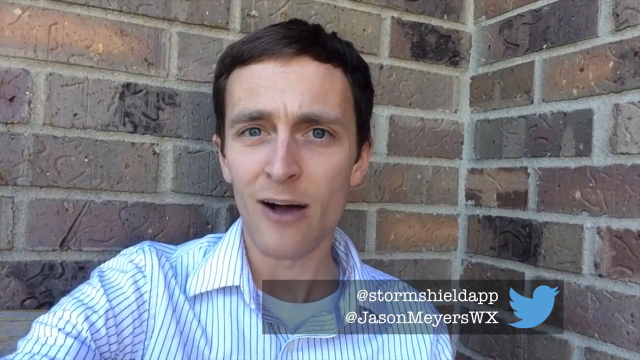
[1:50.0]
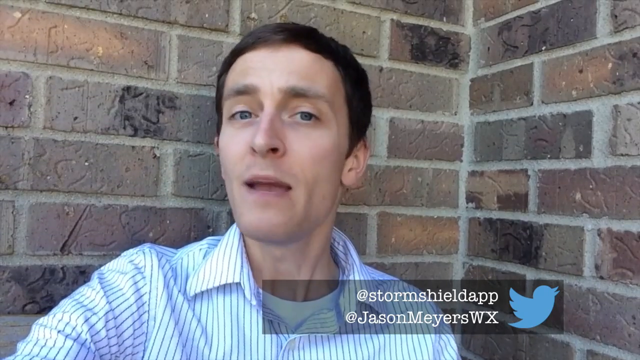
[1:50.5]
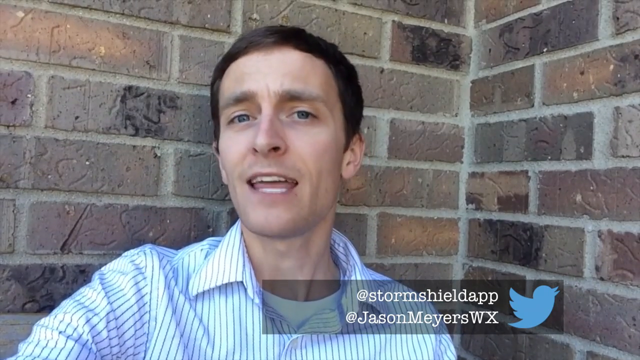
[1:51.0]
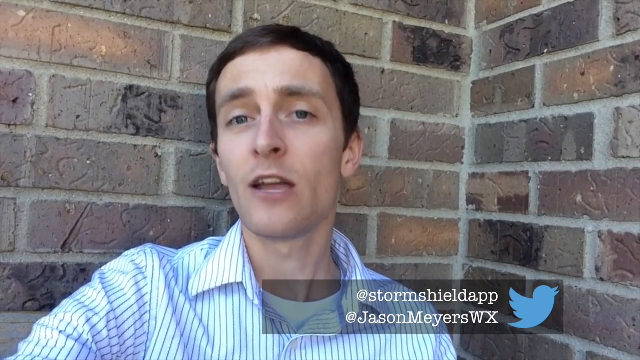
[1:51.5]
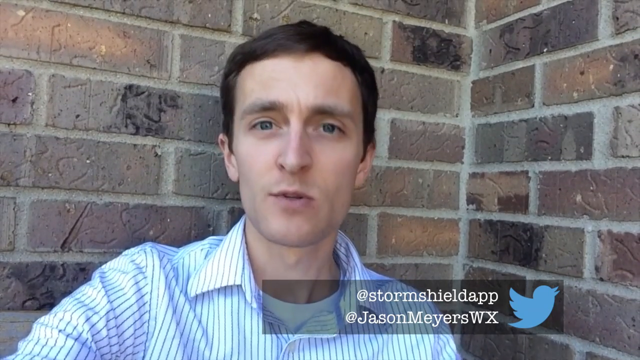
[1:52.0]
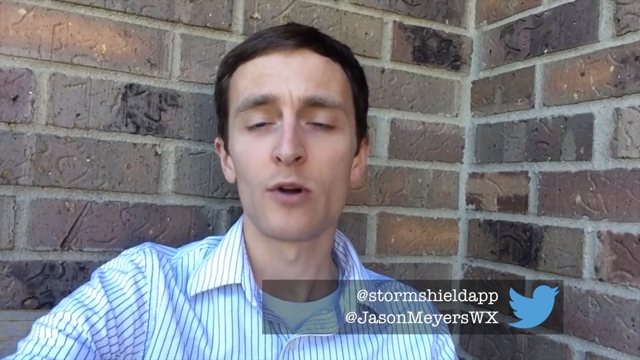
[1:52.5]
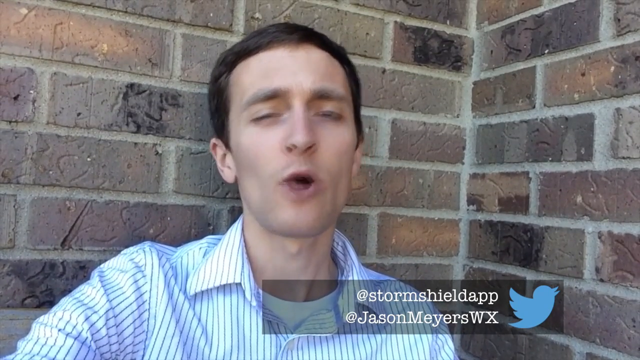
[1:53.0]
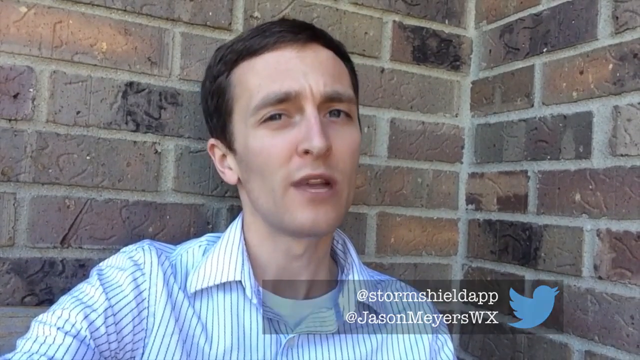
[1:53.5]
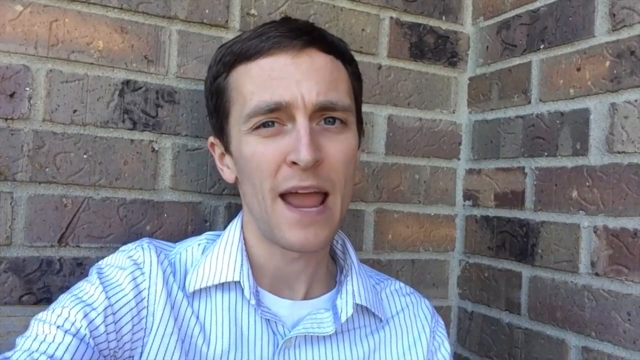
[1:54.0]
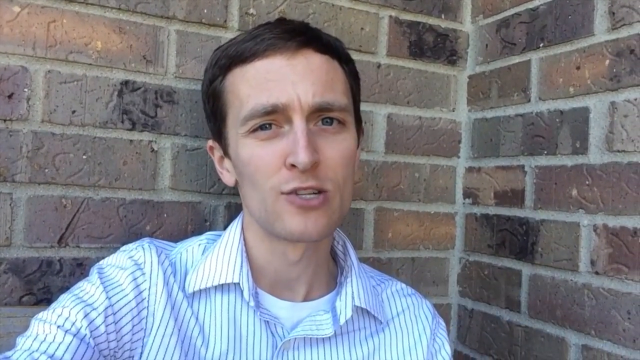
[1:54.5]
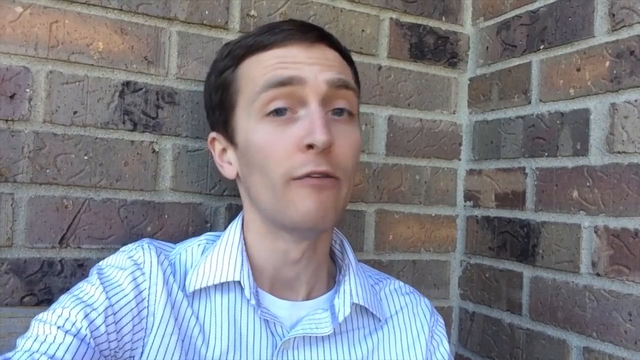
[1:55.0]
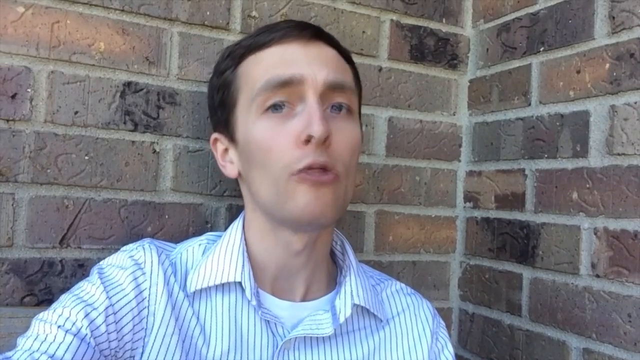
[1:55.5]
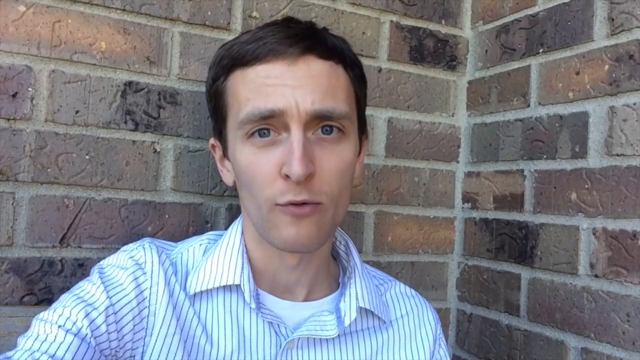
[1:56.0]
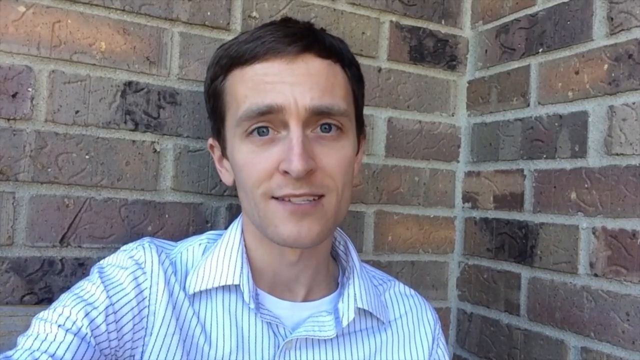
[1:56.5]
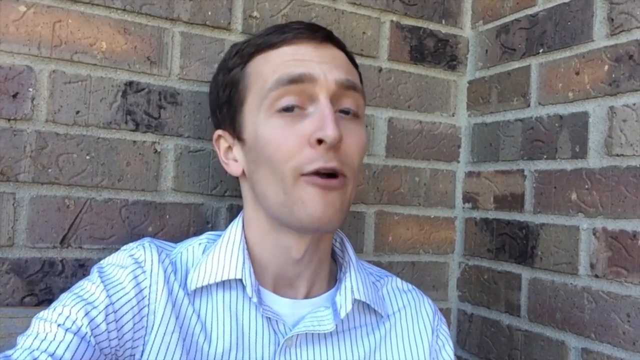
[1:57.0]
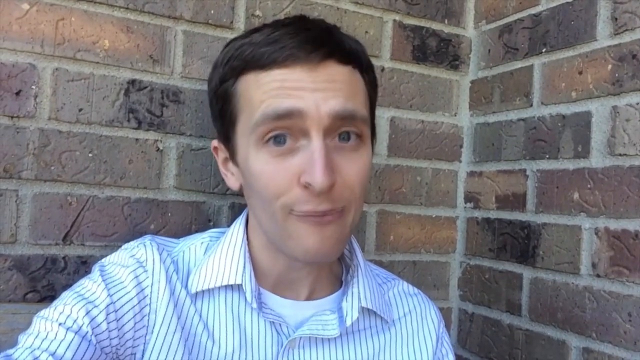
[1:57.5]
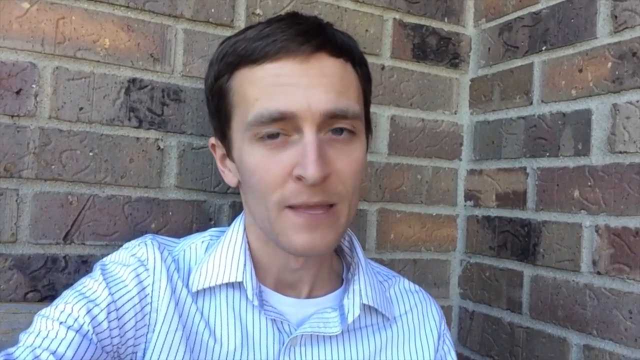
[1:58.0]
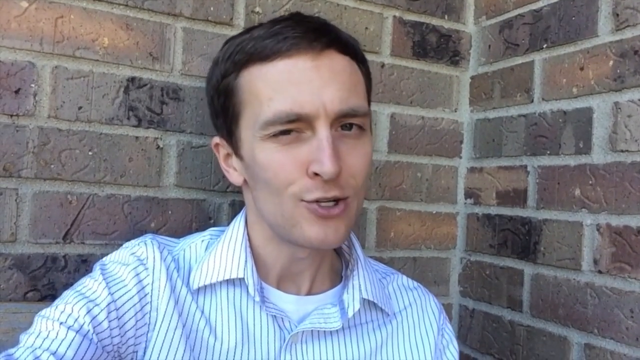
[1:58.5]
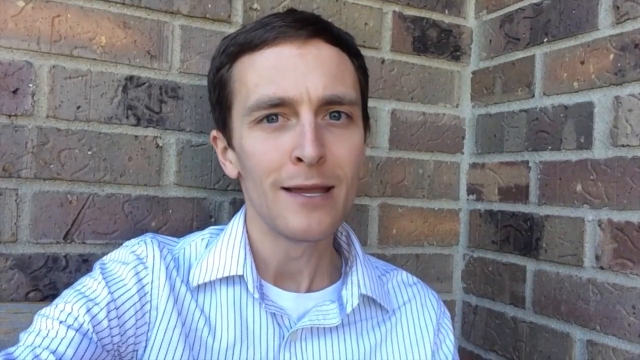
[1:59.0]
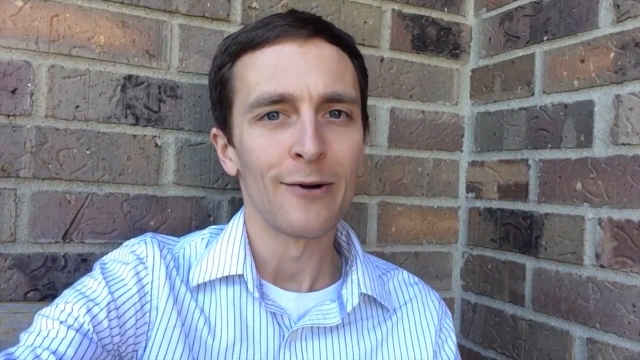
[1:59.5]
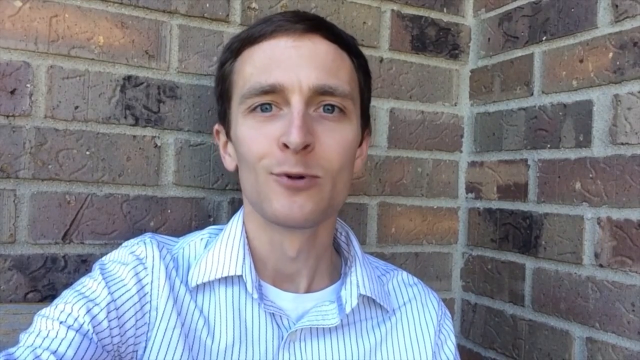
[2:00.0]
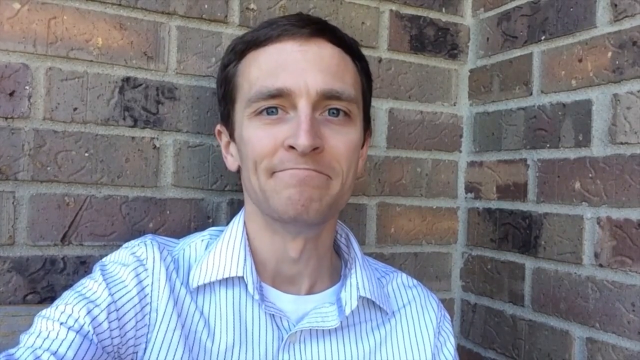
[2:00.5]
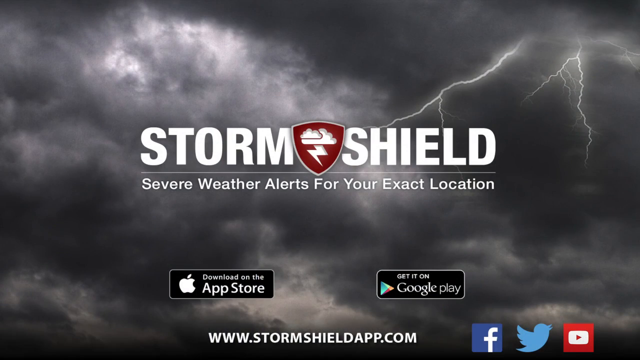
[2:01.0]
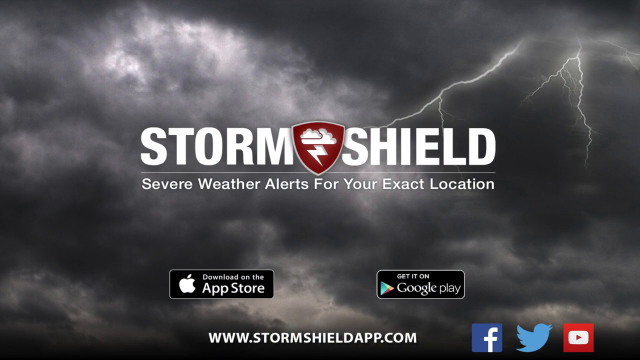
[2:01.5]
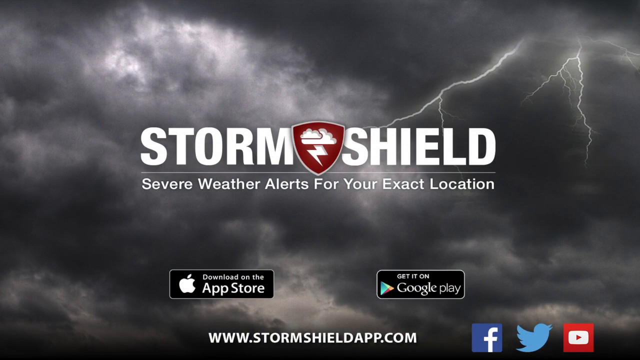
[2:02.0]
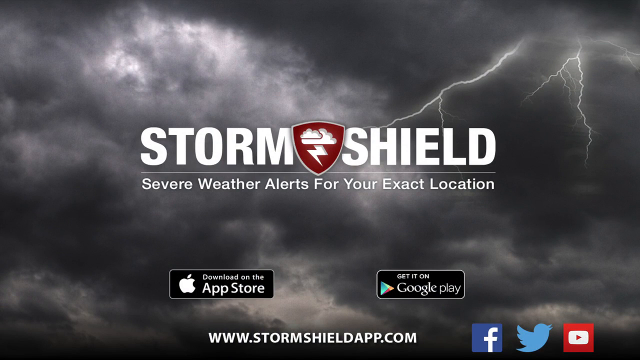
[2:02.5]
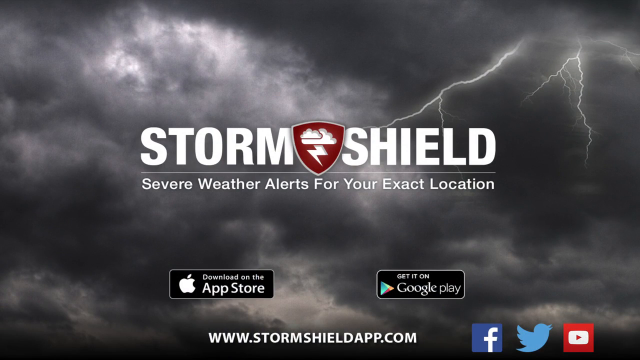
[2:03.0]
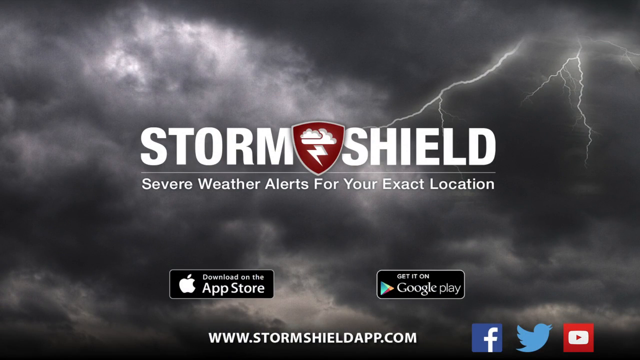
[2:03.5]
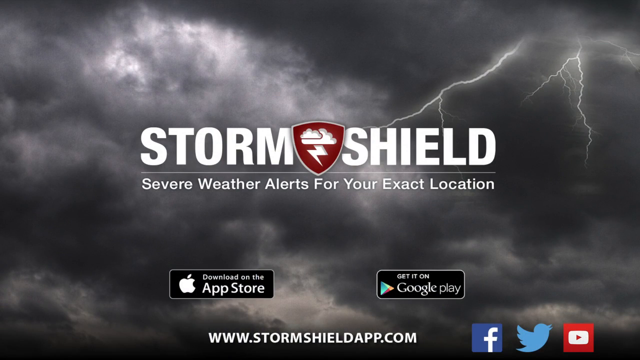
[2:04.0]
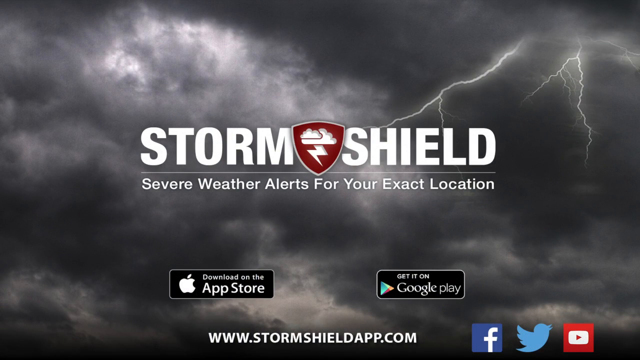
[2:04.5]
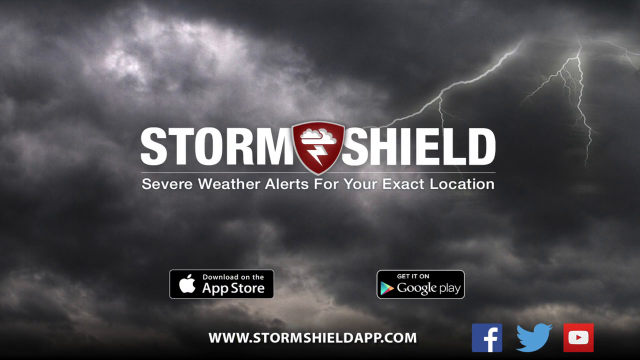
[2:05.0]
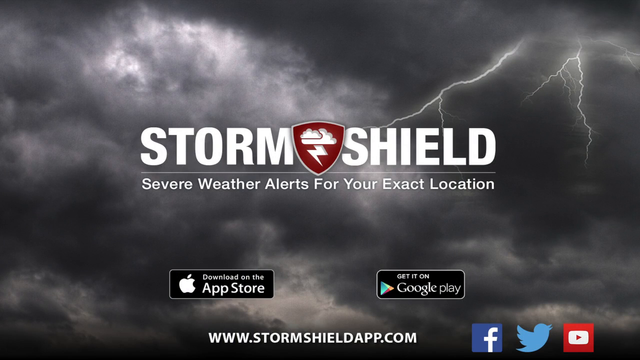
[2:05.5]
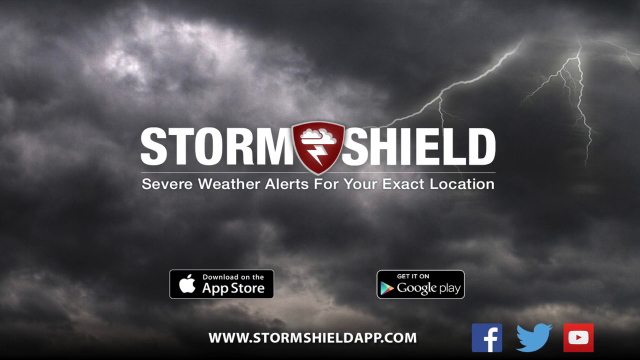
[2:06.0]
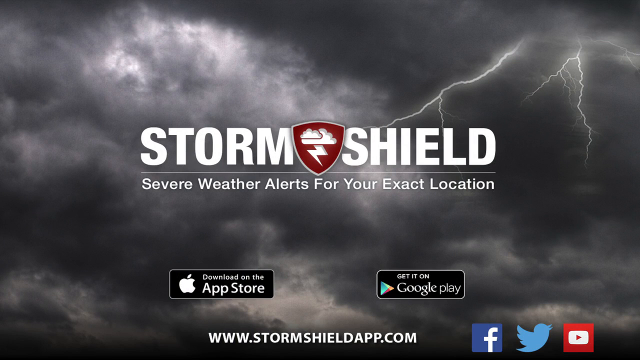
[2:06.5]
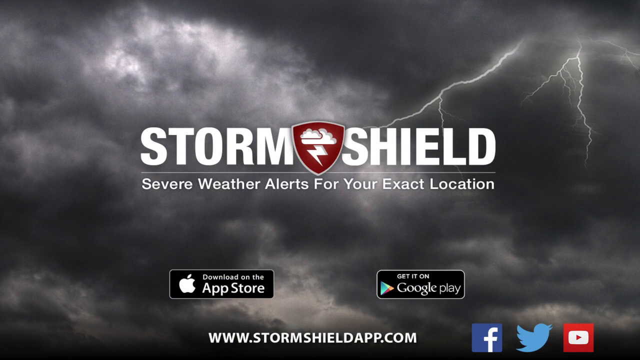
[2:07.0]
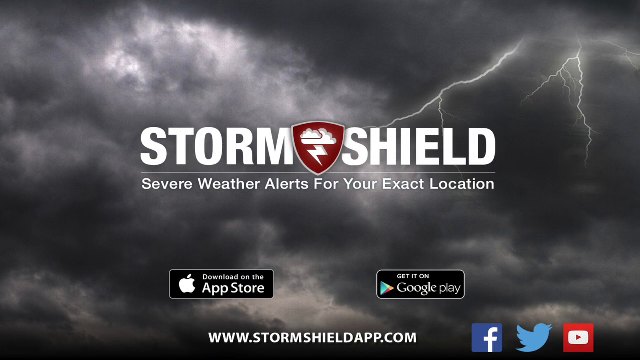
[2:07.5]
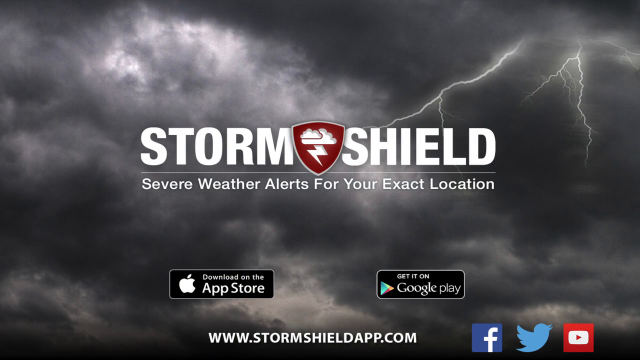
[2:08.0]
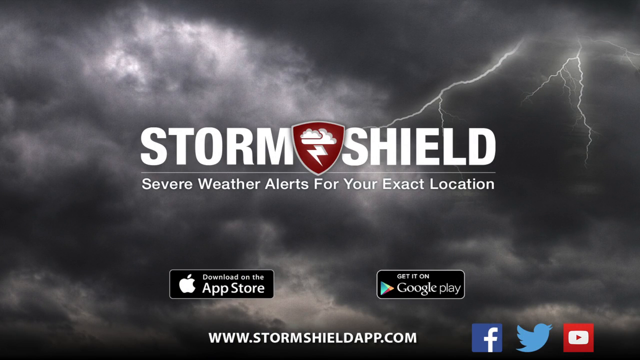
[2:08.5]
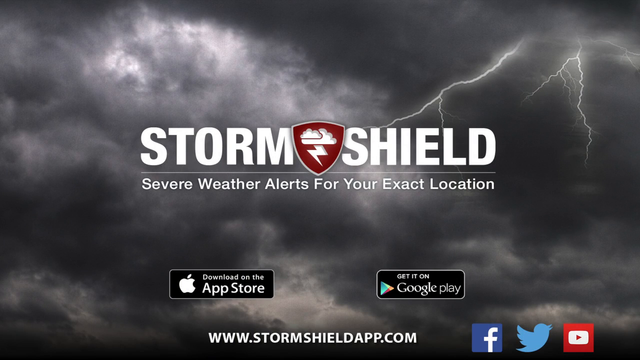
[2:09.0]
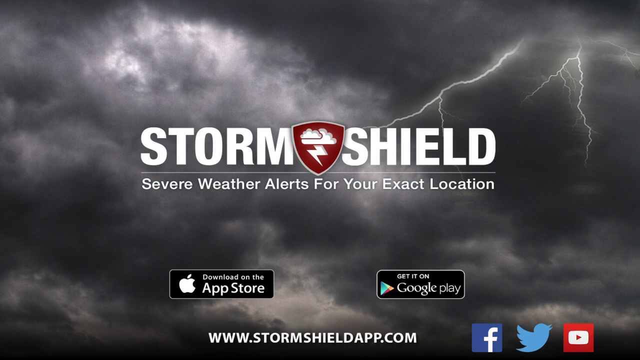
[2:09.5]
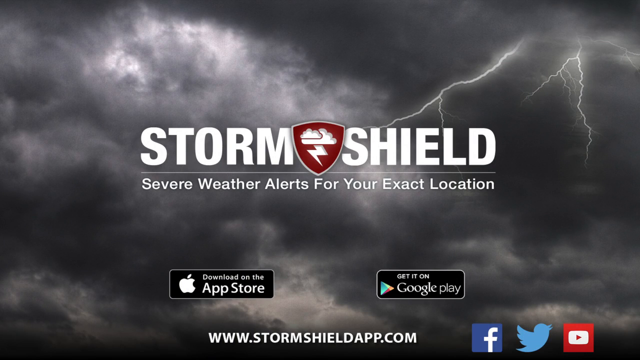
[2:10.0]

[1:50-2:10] The man, a white male with short brown hair wearing the white striped shirt with a white shirt underneath, talks at the camera against the brick wall. His Twitter handles, "at StormShieldApp" and "at Jason Meyers WX," appear at the bottom right with the Twitter logo next to them. He uses his hands as he talks, slightly smirking, very animated, with a lot of head movements. The video then ends on a screen reading "StormShield" in white bold font, with a logo in between showing clouds and a lightning bolt on a red background on a shield. Text reads "severe weather alerts for your exact location." Underneath is a section at the bottom reading "download on the app store" with the Apple logo and, to the right of that, "get it on Google Play" with the Google Play logo. The background is clouds with lightning bolts, and at the bottom right are a Facebook logo, a Twitter logo and a YouTube logo.